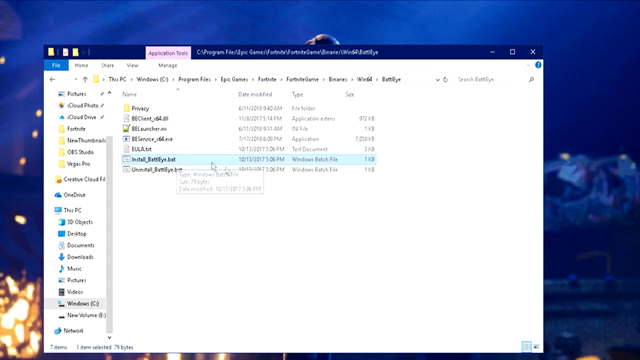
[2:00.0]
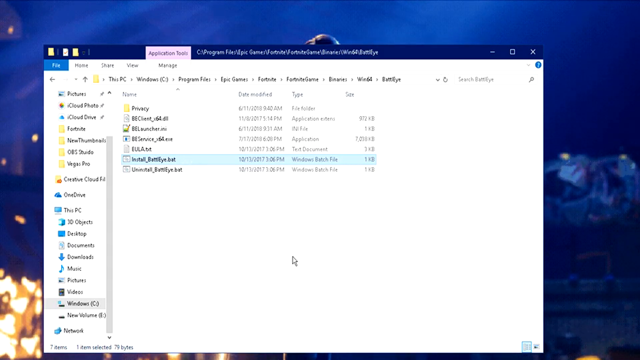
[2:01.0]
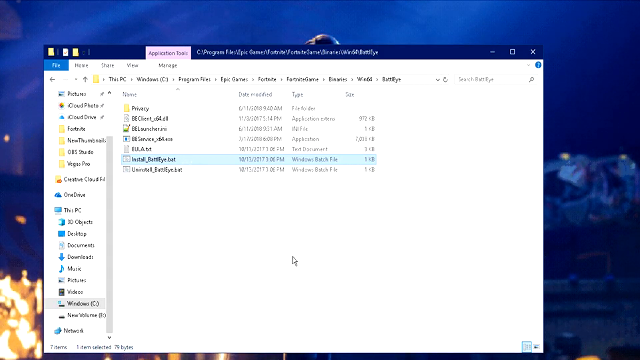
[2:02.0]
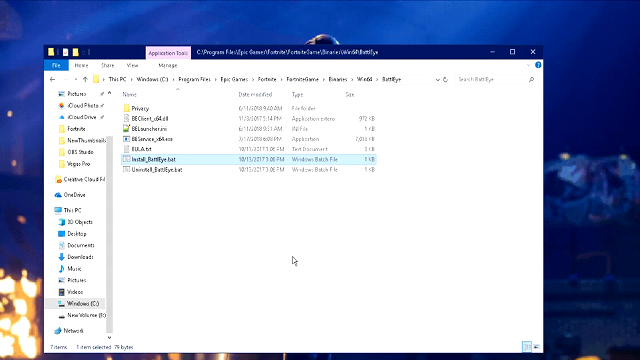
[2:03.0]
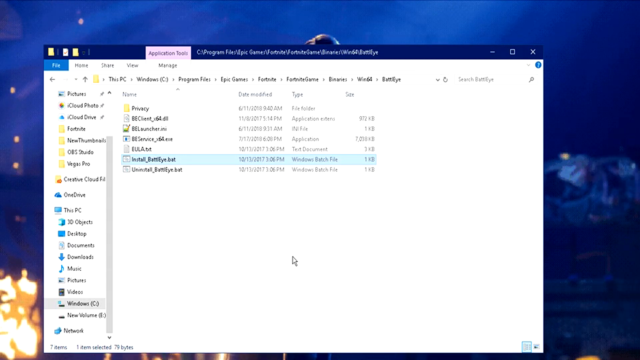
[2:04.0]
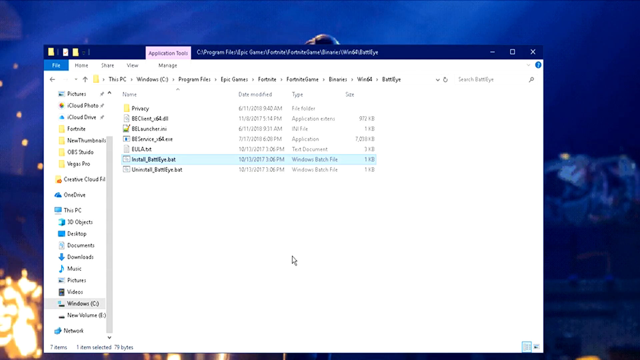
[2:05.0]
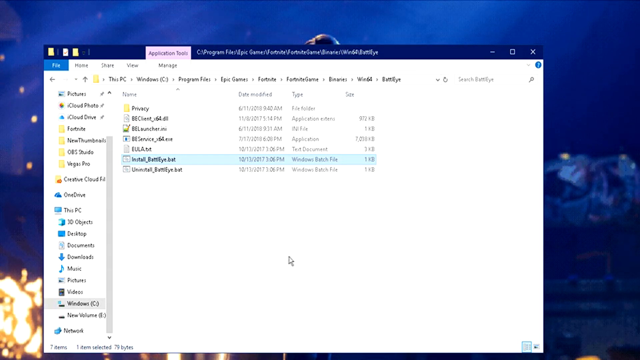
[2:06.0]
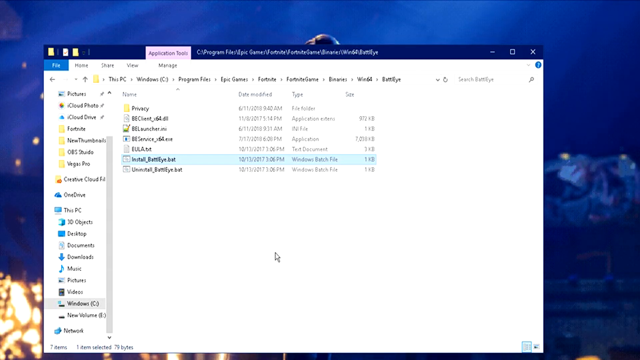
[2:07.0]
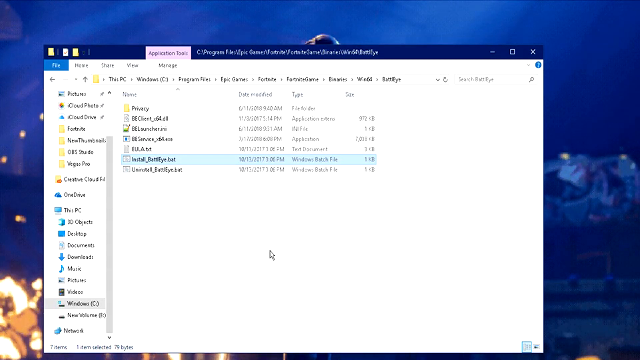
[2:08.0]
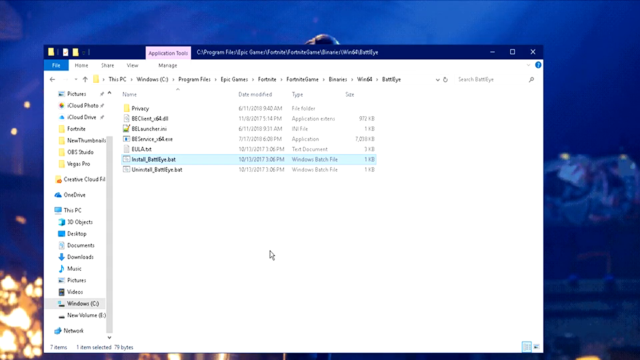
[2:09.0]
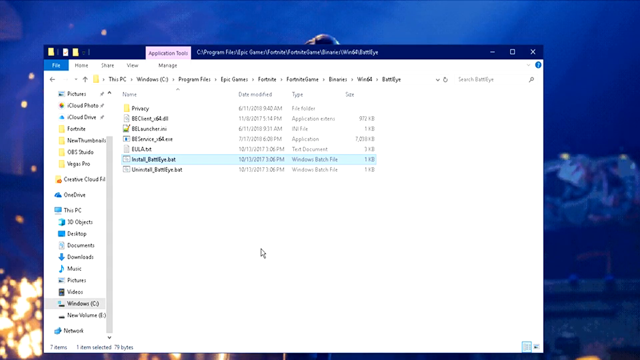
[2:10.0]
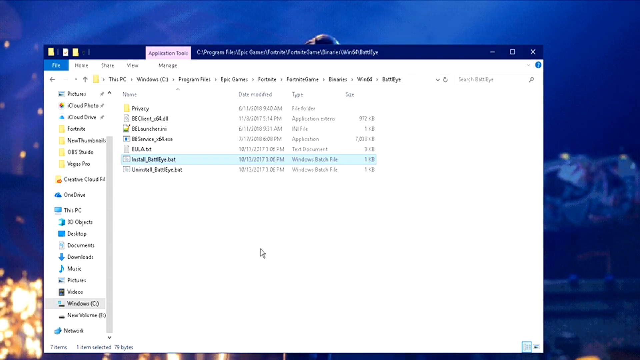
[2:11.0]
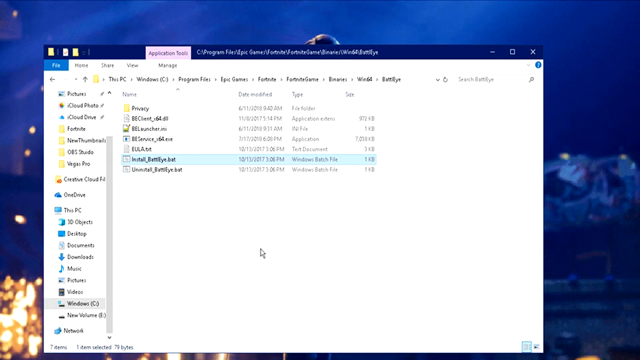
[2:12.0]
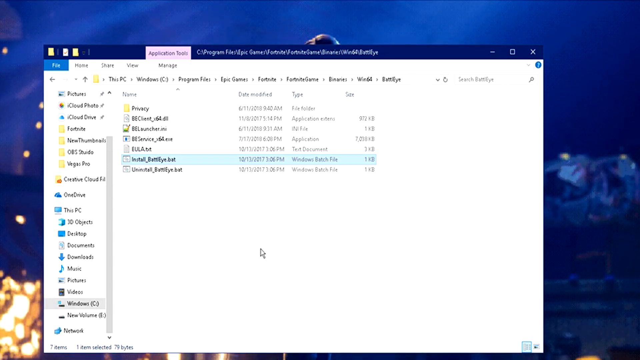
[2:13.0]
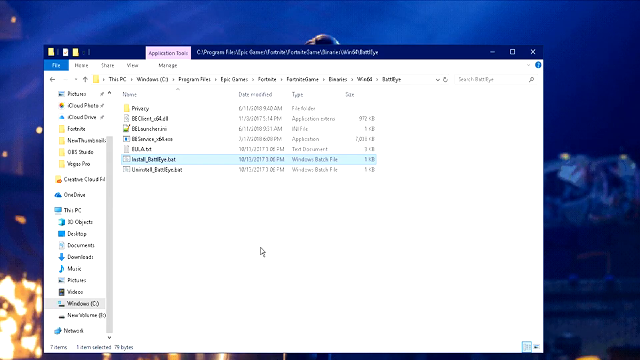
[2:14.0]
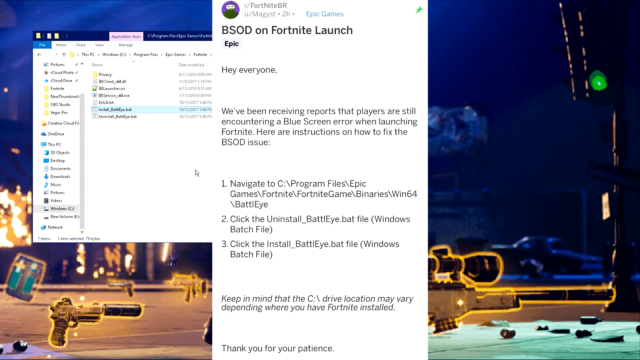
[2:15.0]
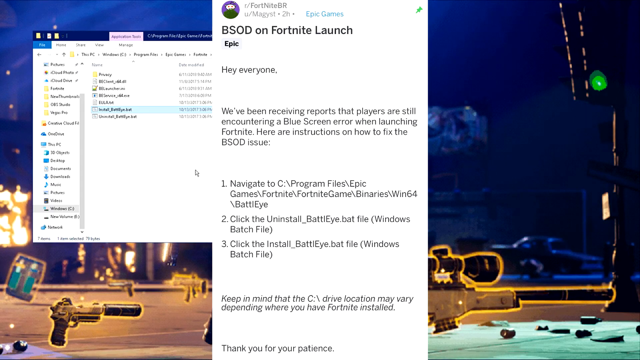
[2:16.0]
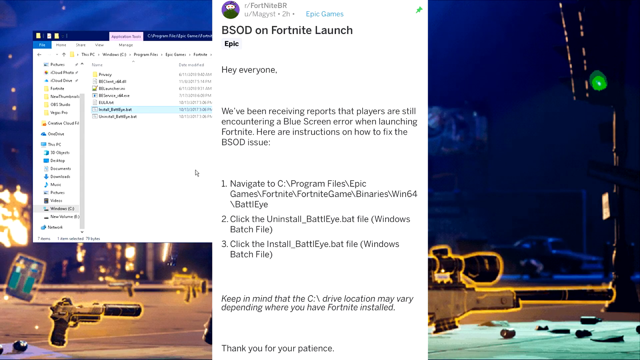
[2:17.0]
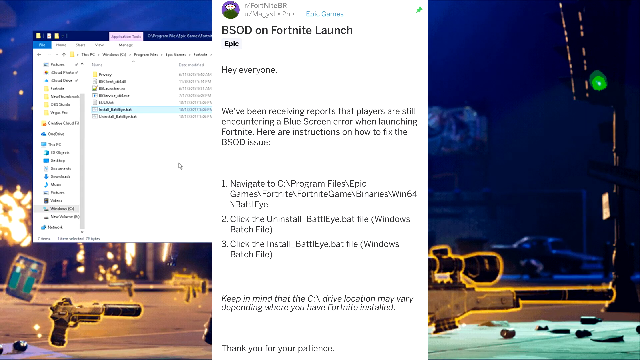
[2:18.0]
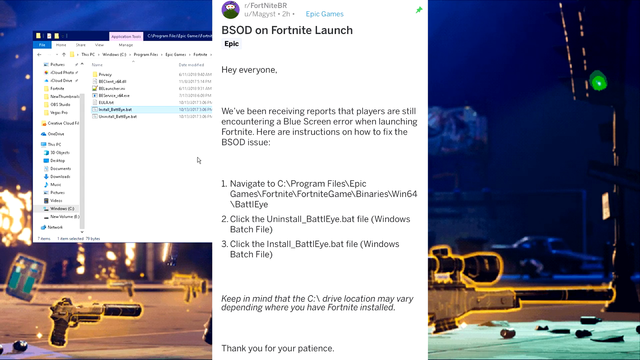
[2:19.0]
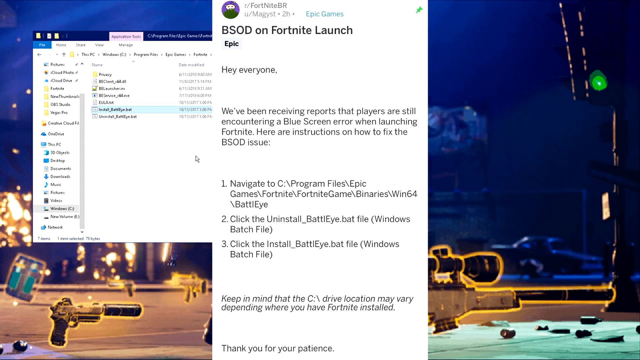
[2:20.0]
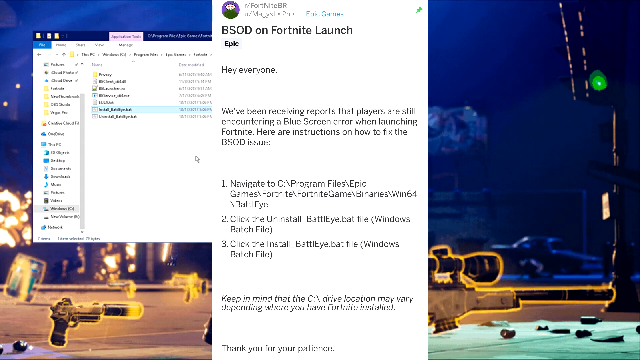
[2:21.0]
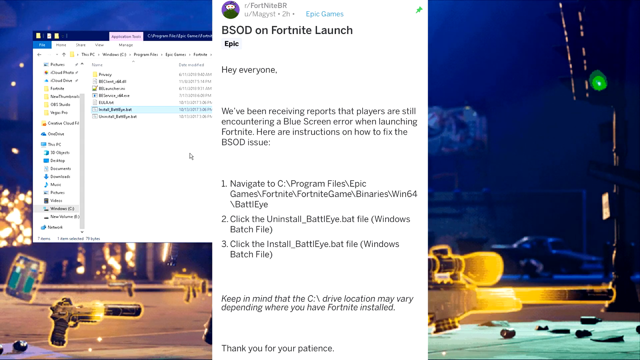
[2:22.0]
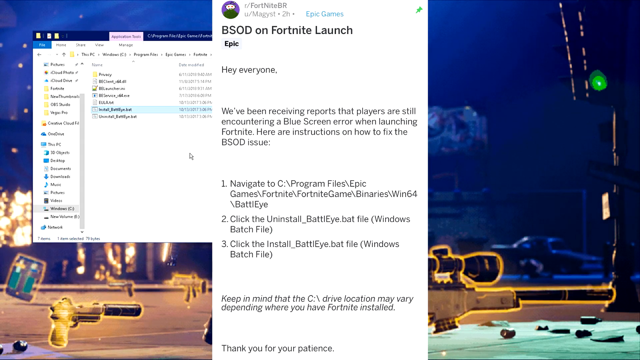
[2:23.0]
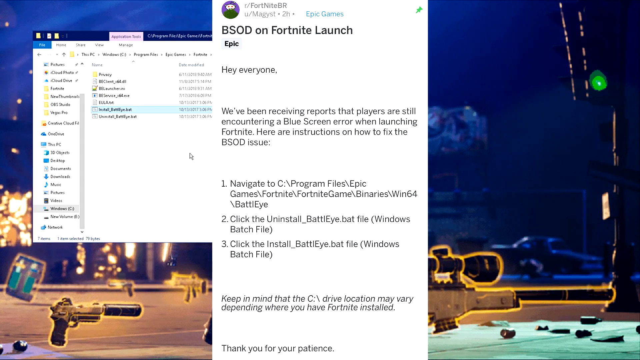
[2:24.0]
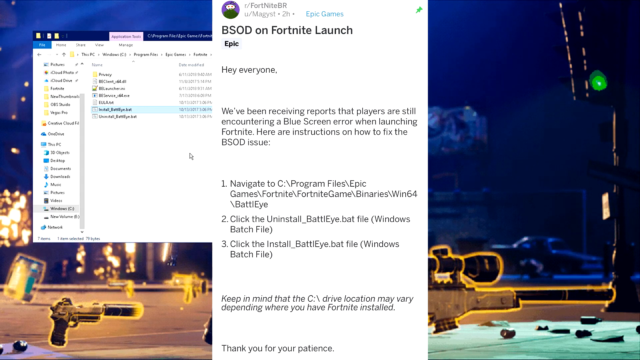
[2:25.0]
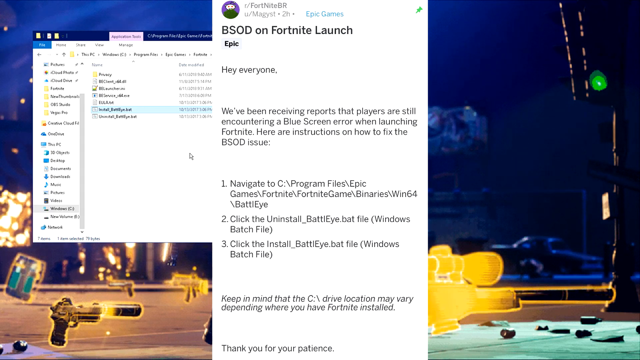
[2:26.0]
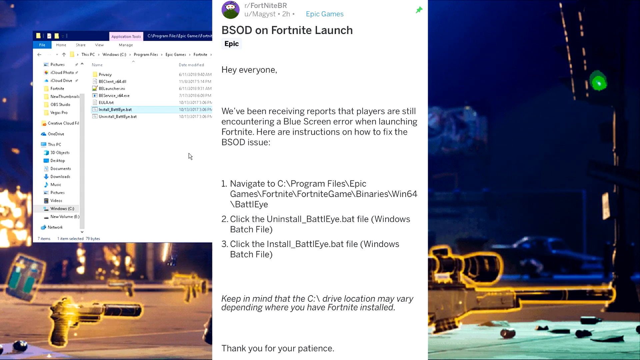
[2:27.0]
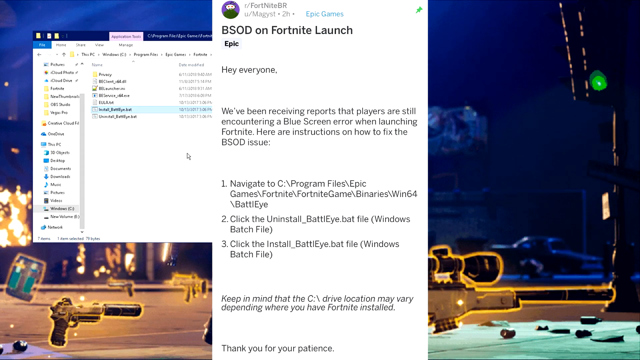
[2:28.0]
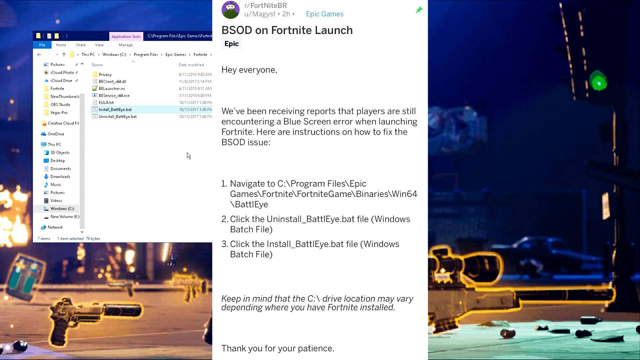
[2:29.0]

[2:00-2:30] He then selects a different text file. There is still some movement in the background, and the fire of the video game is clearly still burning. The mouse pauses for a few seconds while the file loads. Once the file opens, it is a message titled "bsod on fortnite launch", which looks to be a Reddit or Discord thread. In the message, some type of administrative team, perhaps a mod, says they have been receiving reports that players are still encountering a blue screen error when launching Fortnite, and gives instructions on how to fix the issue, along with a note that the C drive location may vary depending on where Fortnite is installed. The mouse is on the left side of the screen in the middle, moving slightly now and then while the focus stays on the message.